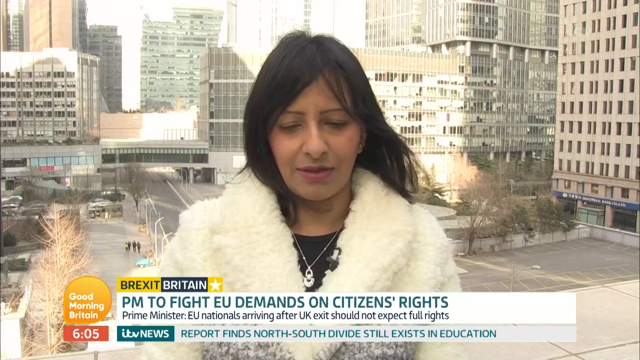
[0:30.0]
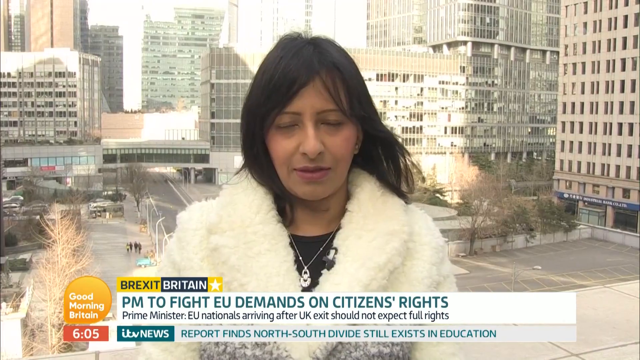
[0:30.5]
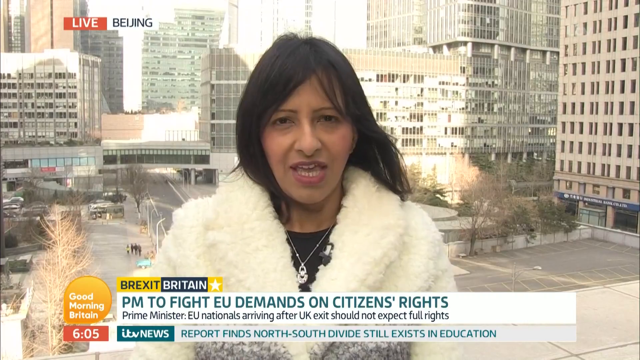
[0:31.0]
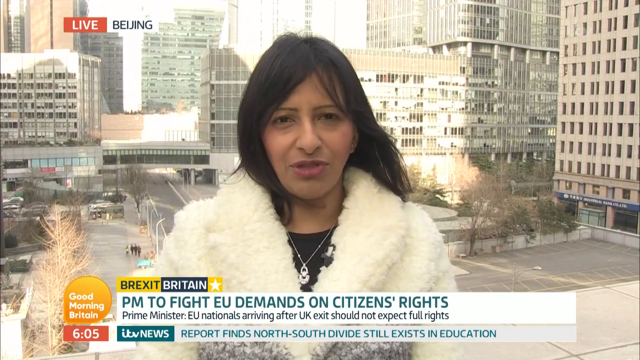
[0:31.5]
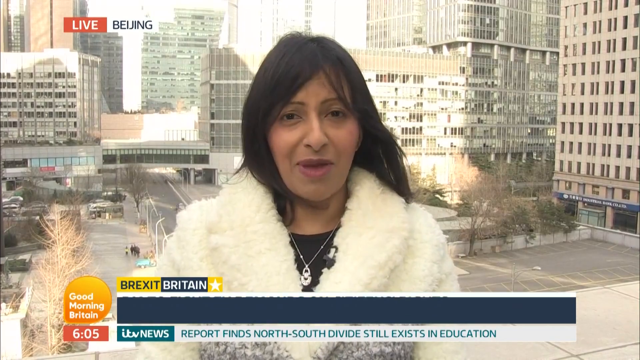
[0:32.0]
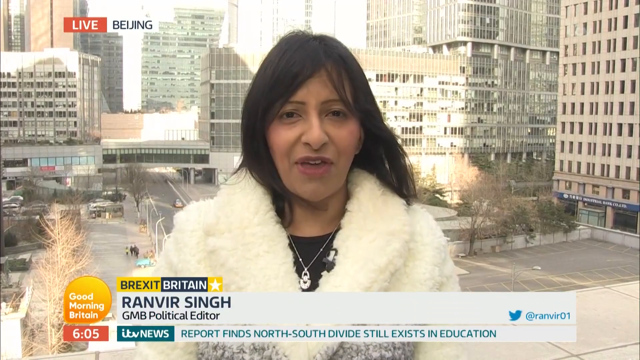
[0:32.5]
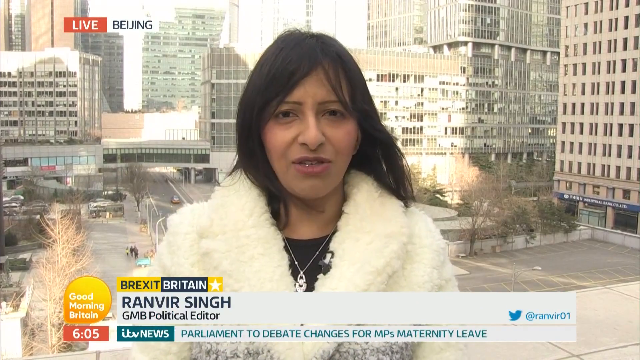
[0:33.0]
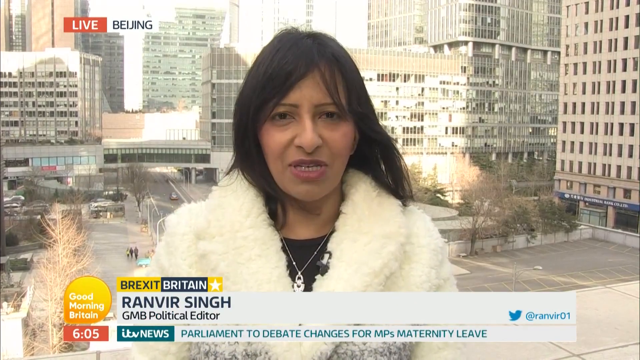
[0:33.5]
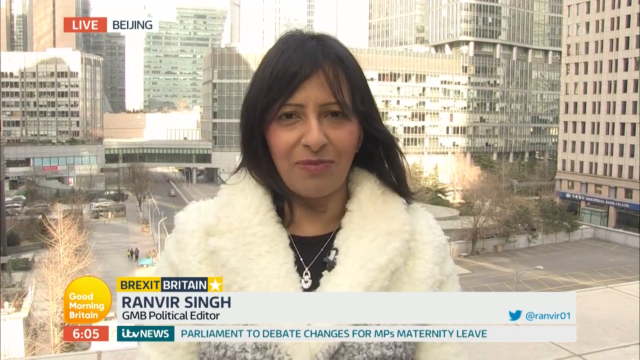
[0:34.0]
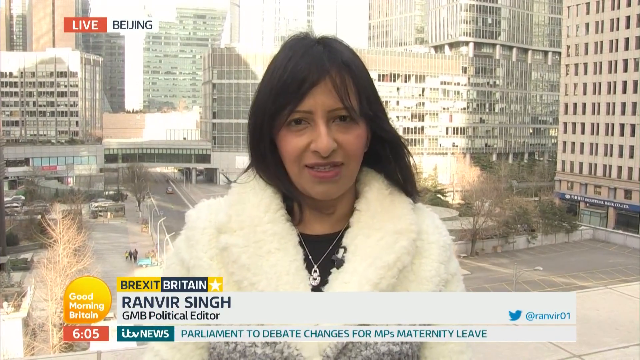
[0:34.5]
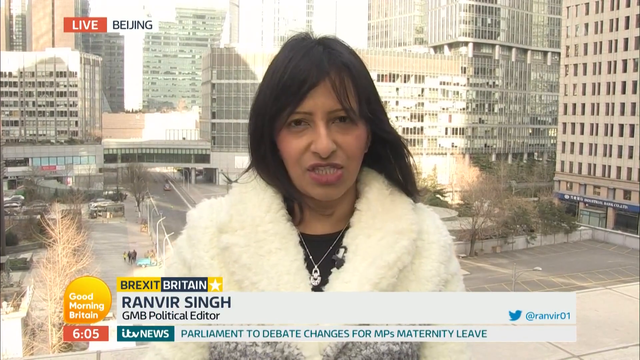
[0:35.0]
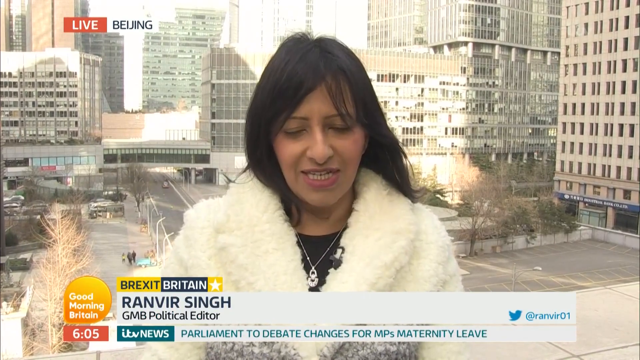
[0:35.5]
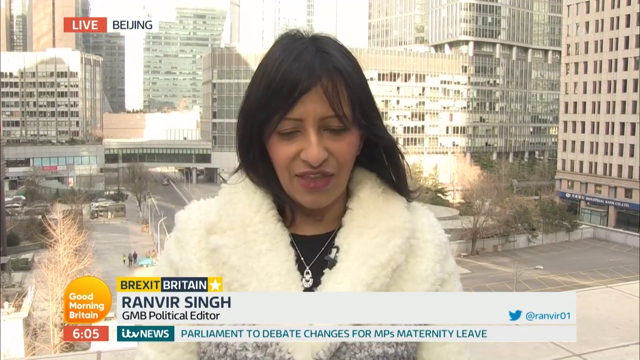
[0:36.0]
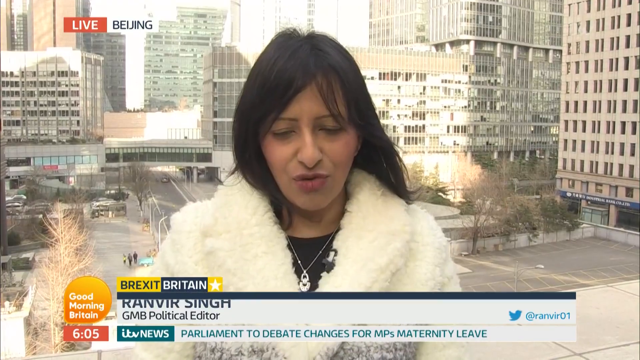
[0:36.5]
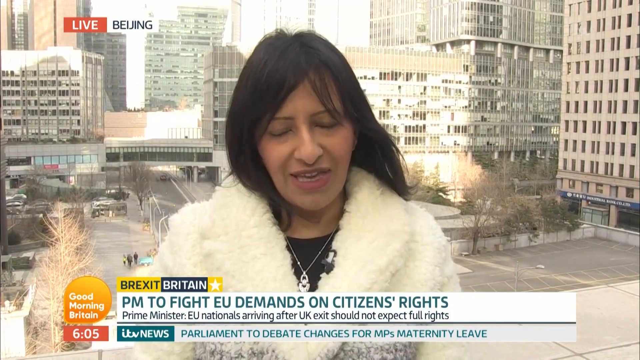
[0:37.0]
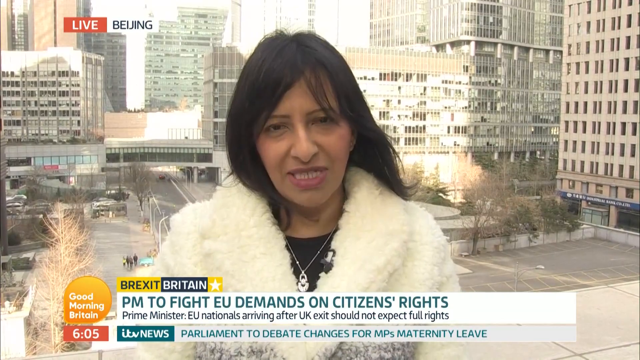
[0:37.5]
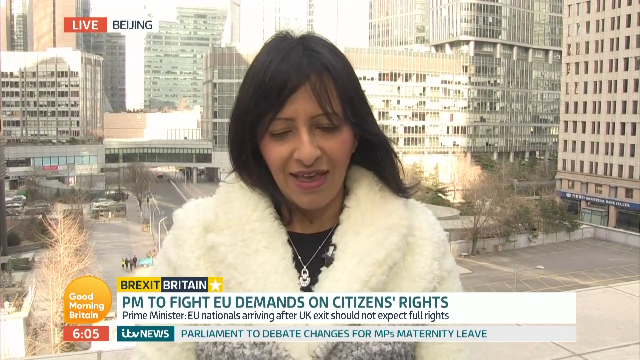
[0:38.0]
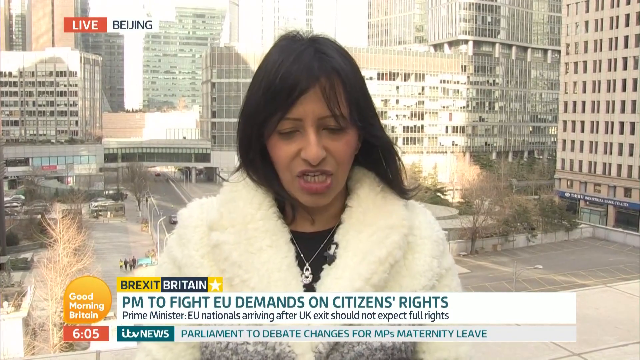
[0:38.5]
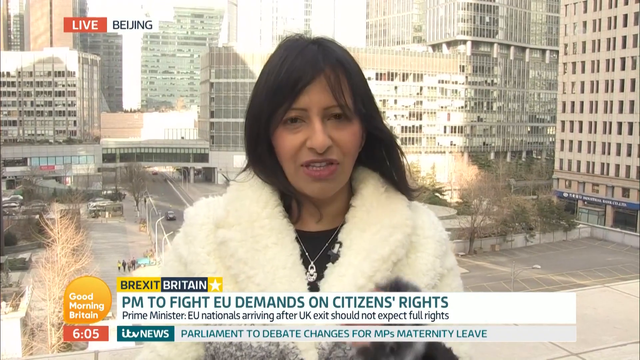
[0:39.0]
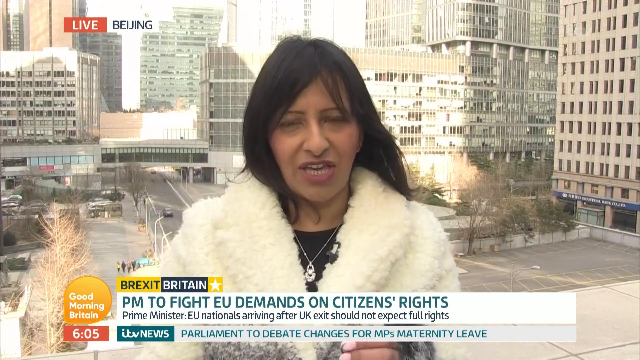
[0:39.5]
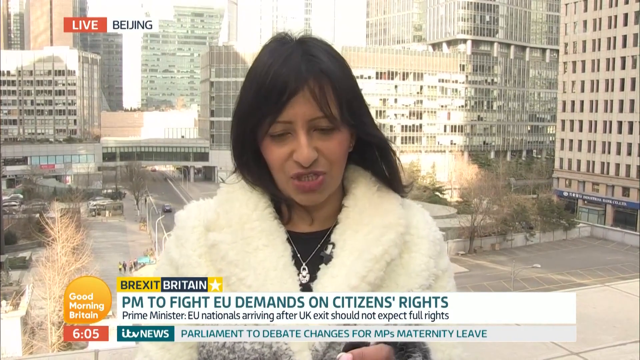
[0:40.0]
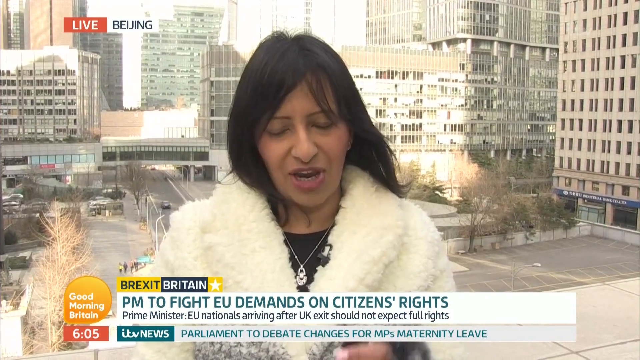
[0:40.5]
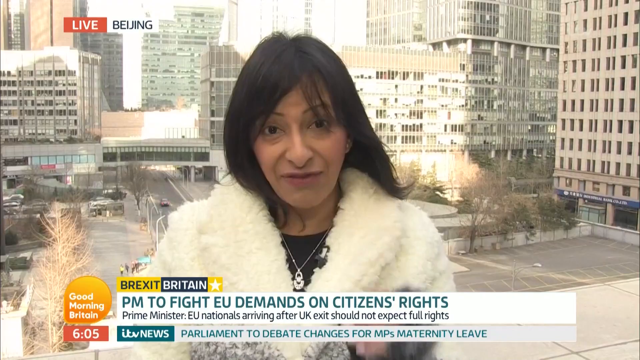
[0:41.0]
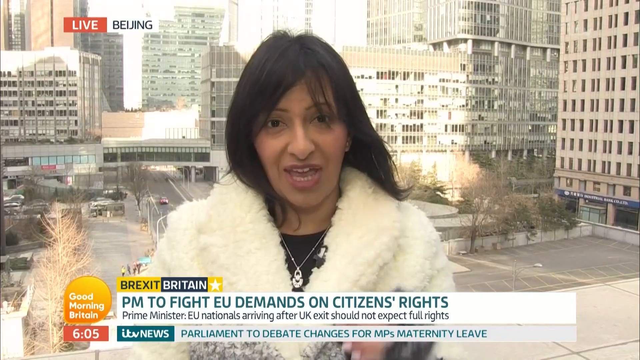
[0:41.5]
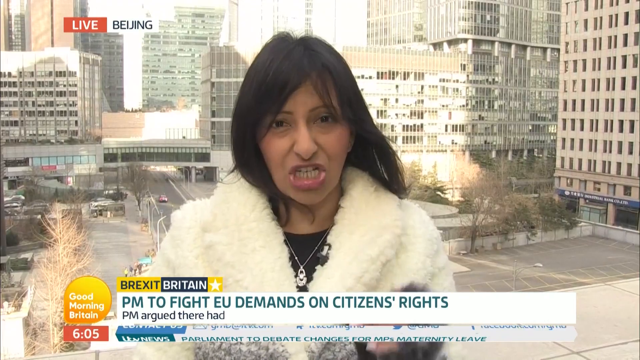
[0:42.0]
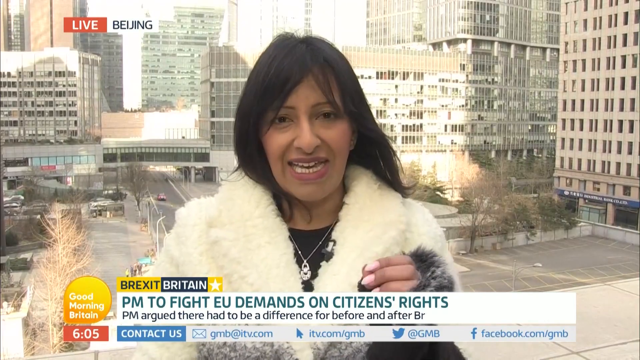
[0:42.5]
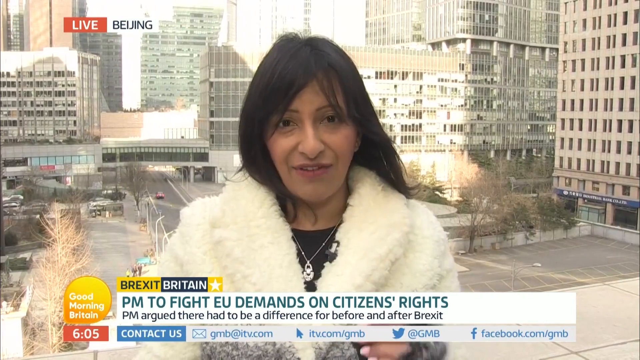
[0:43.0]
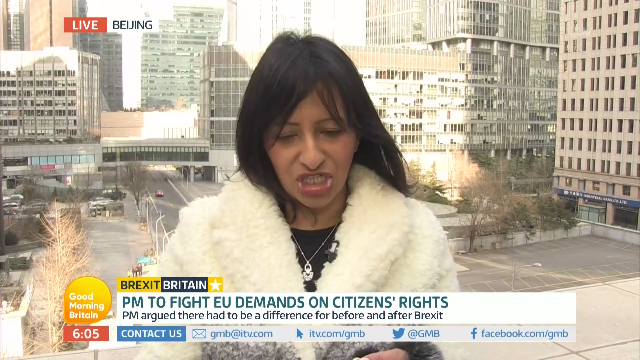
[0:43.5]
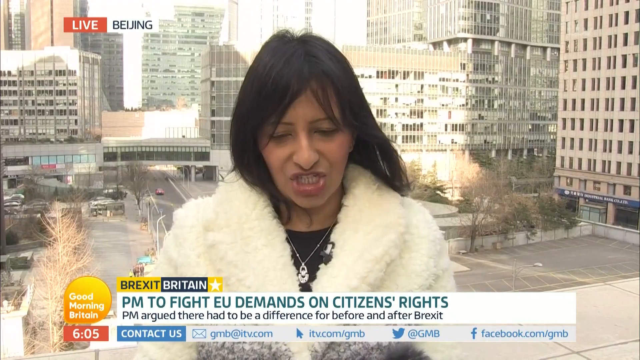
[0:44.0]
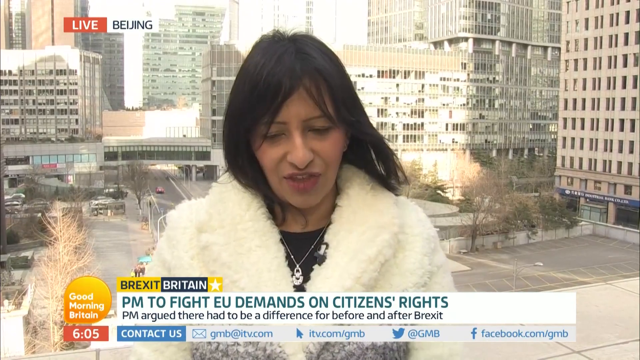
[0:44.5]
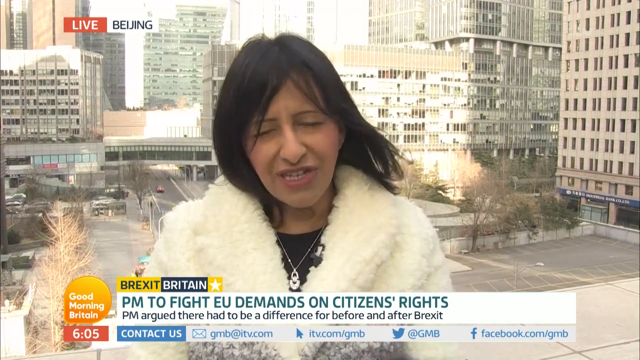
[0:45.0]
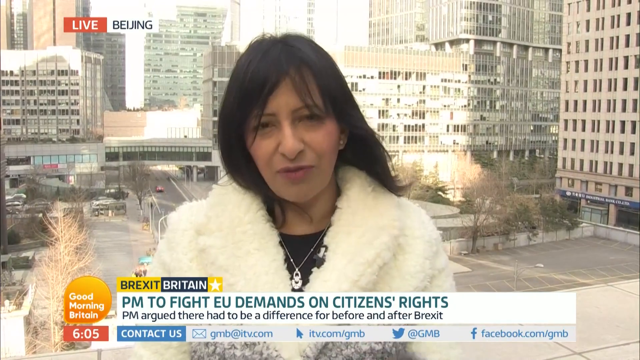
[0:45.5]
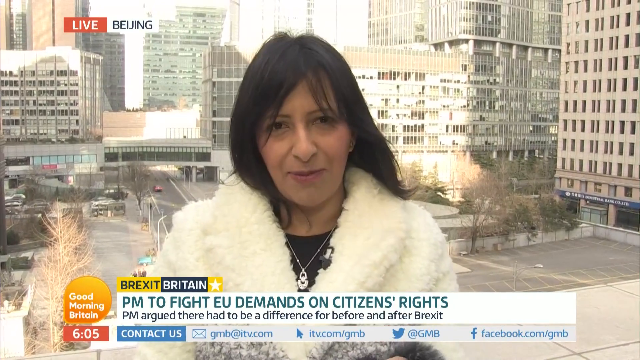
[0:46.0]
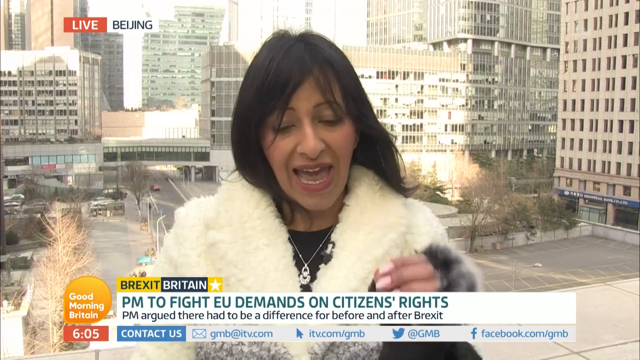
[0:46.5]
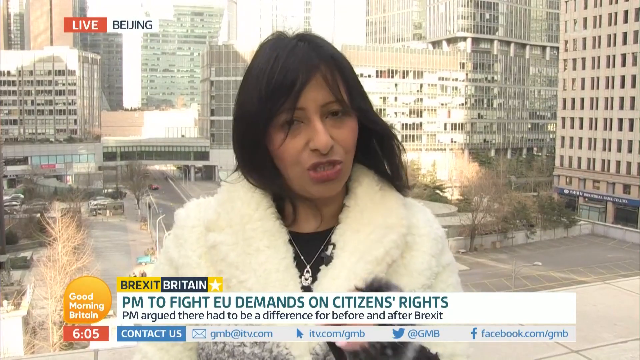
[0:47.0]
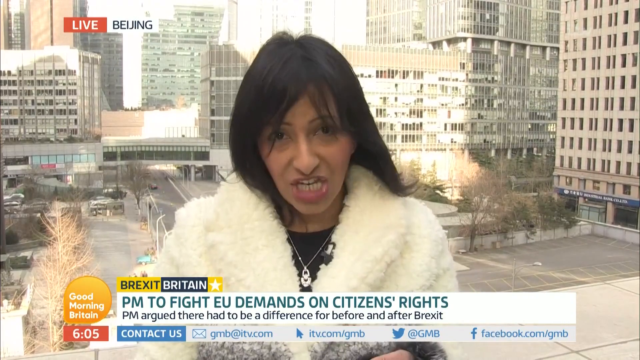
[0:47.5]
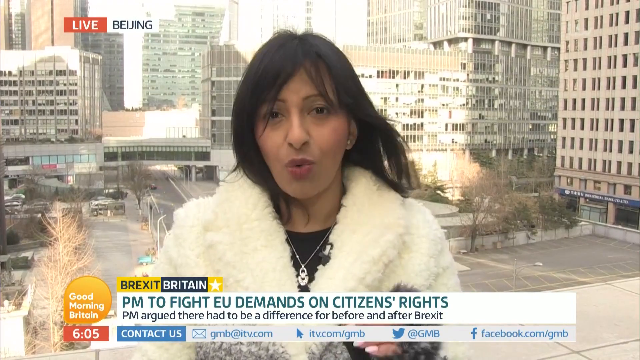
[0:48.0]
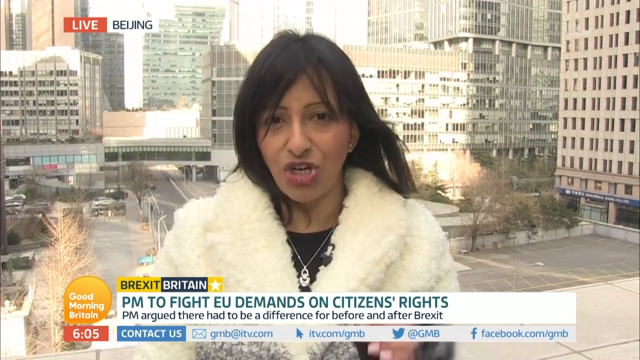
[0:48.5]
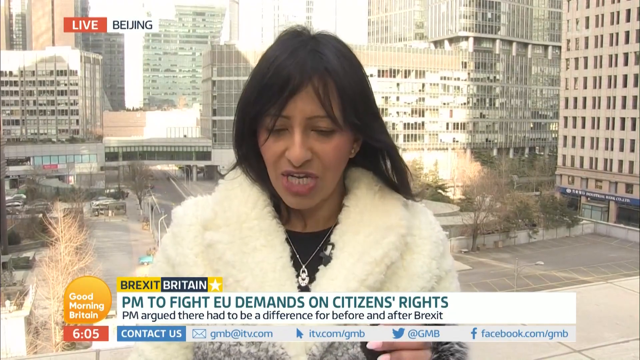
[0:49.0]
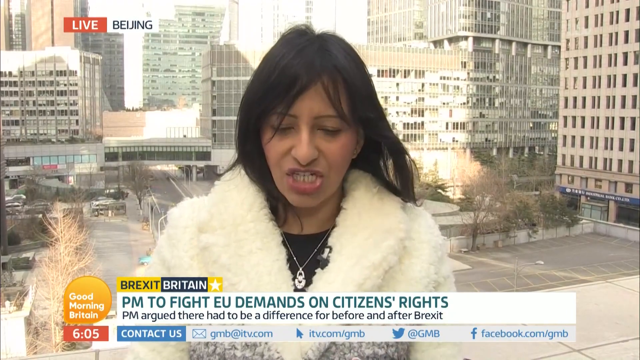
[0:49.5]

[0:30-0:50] The broadcast features a woman in a white puff jacket with a black shirt who seems to be Pakistani and wears a weave. She is Ravir Saina, a GMP political editor, live from Beijing. Behind her are big buildings; the atmosphere looks cold, it is morning with a bit of sunrise appearing in the background, there are reflections of light, and there is wind. She seems to be inside or on top of a building. Behind her, three men on the street seem to be having a chat. The streets seem somewhat empty, with few cars passing and no people walking around the city.